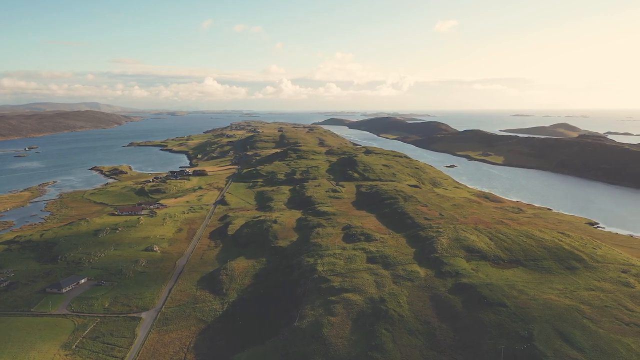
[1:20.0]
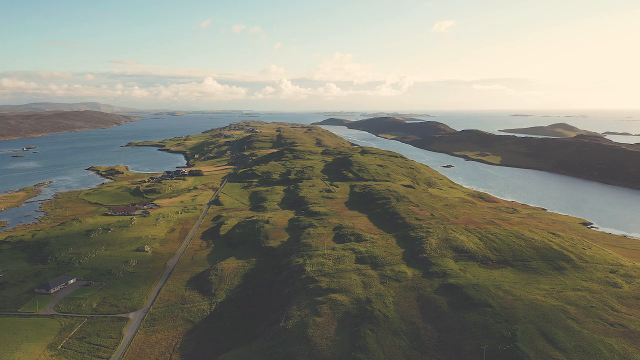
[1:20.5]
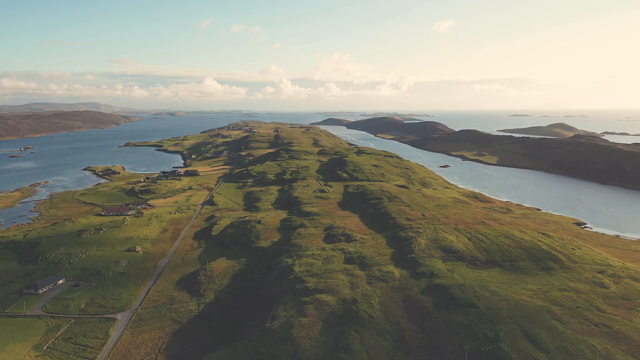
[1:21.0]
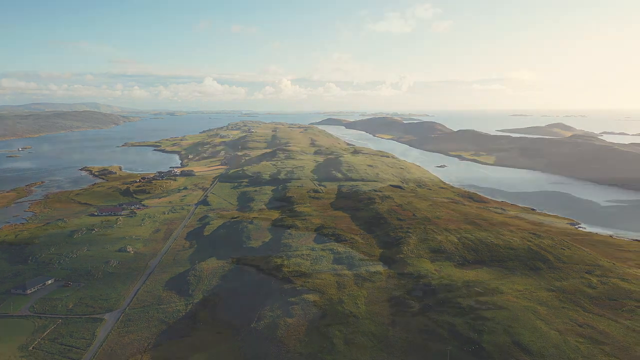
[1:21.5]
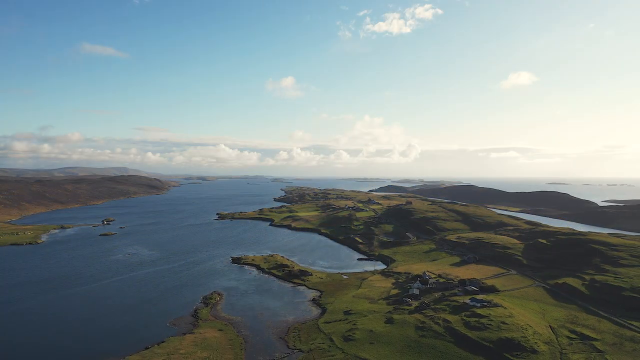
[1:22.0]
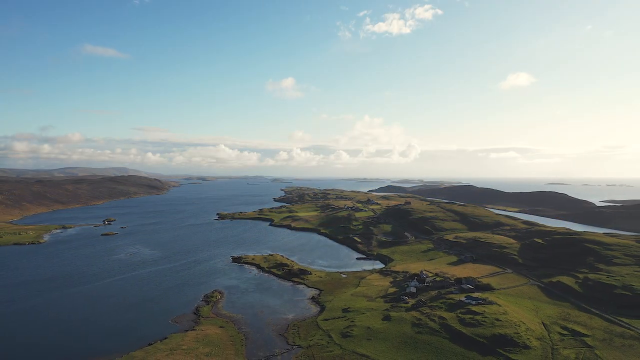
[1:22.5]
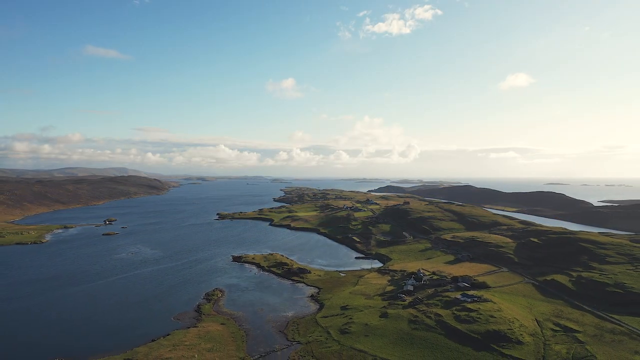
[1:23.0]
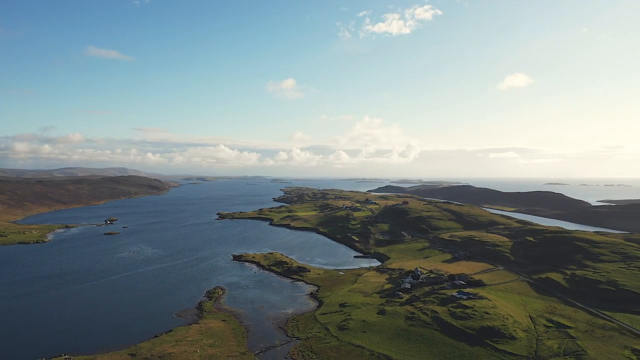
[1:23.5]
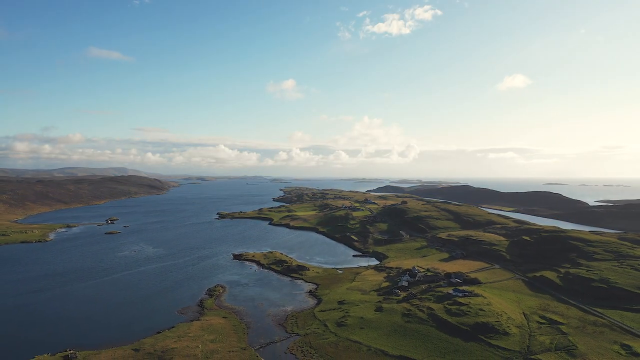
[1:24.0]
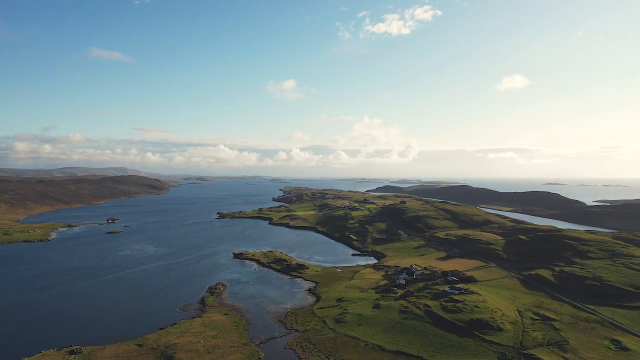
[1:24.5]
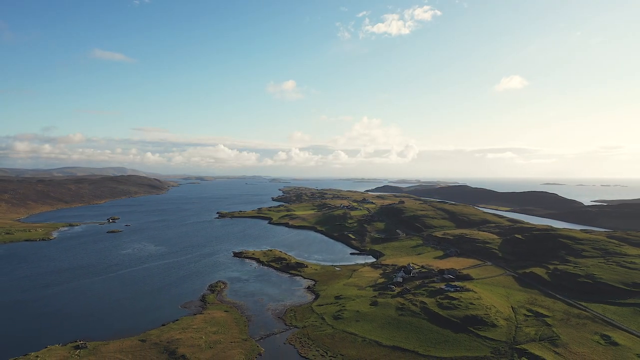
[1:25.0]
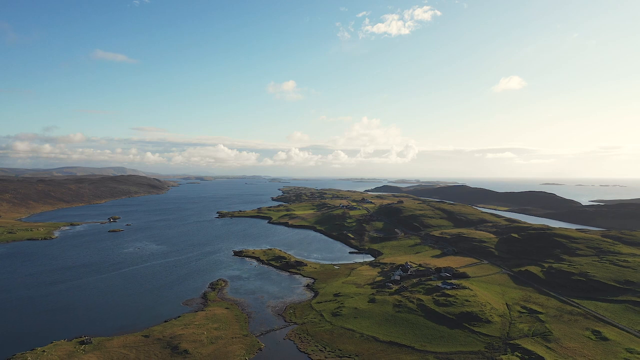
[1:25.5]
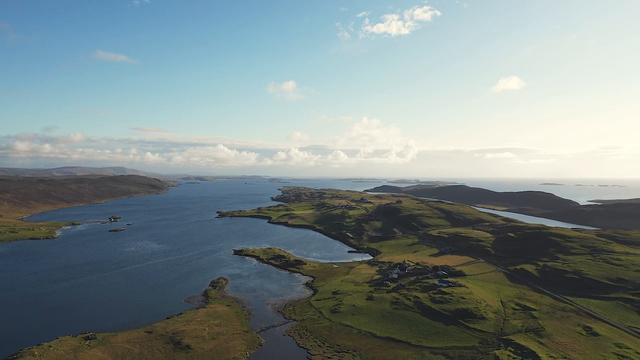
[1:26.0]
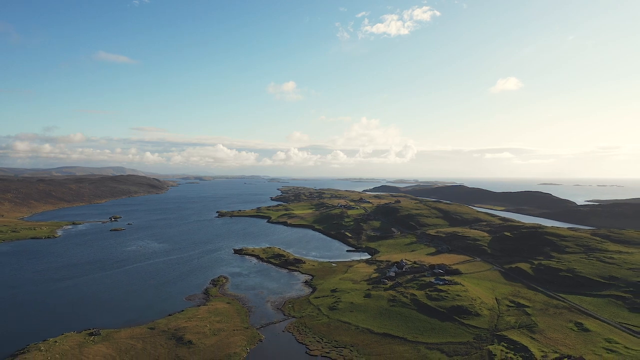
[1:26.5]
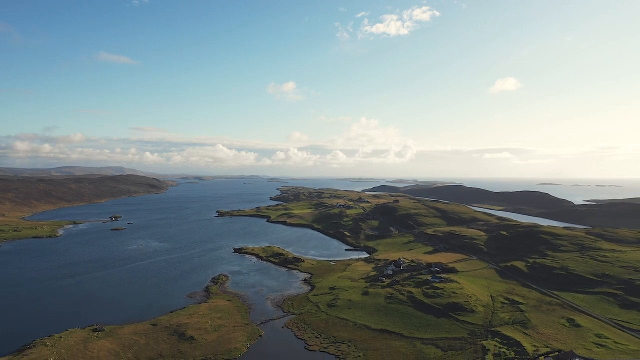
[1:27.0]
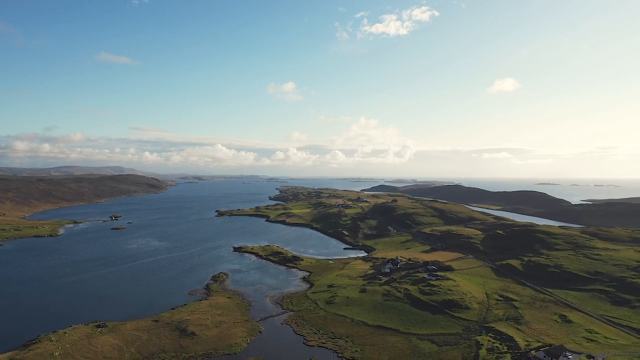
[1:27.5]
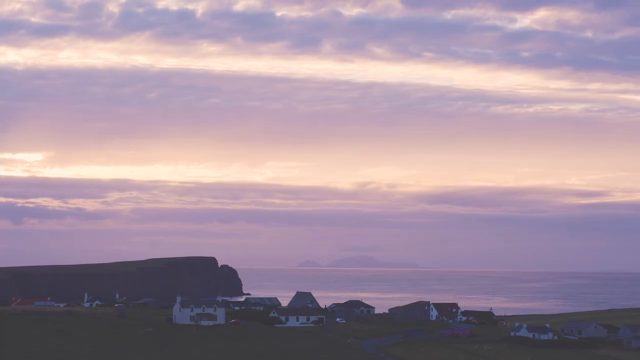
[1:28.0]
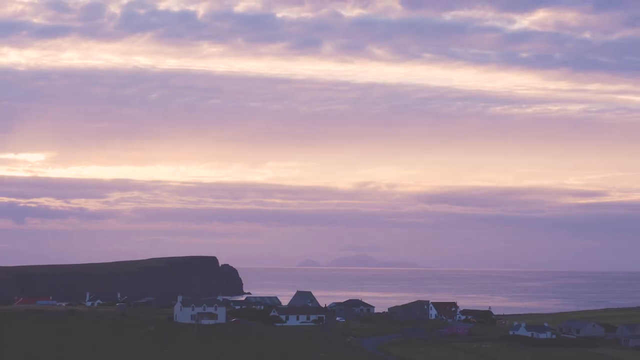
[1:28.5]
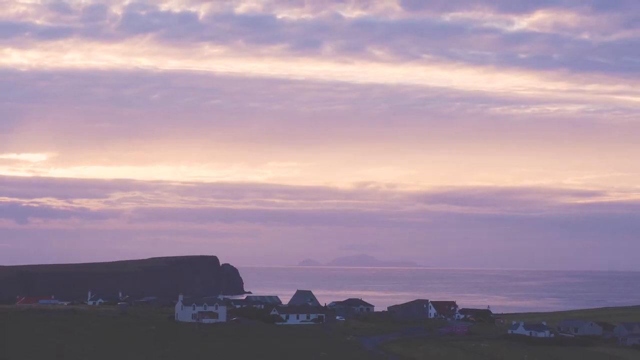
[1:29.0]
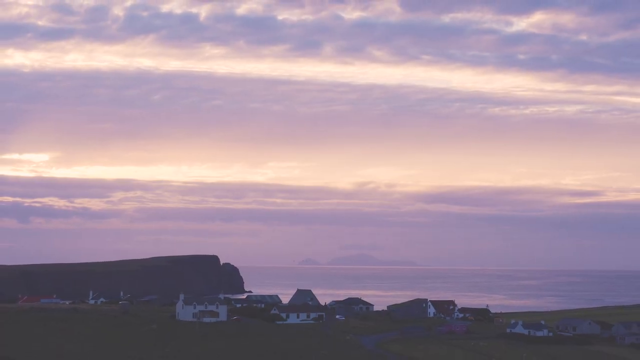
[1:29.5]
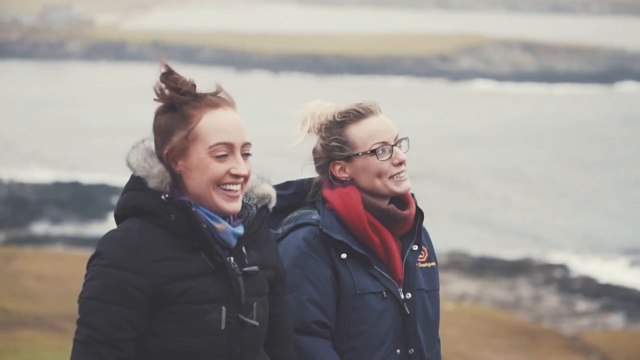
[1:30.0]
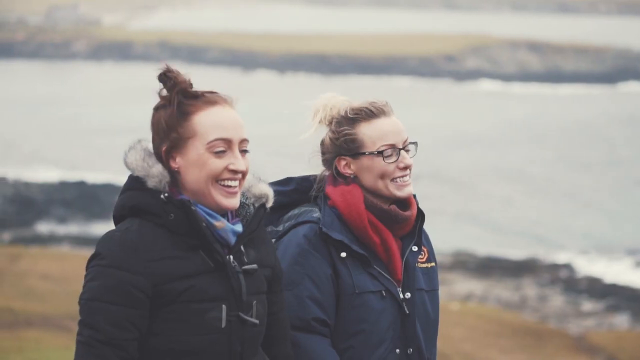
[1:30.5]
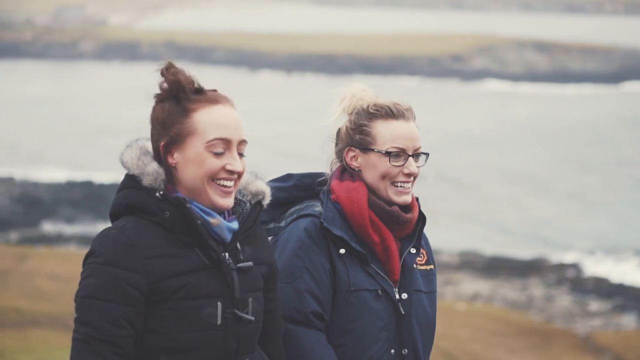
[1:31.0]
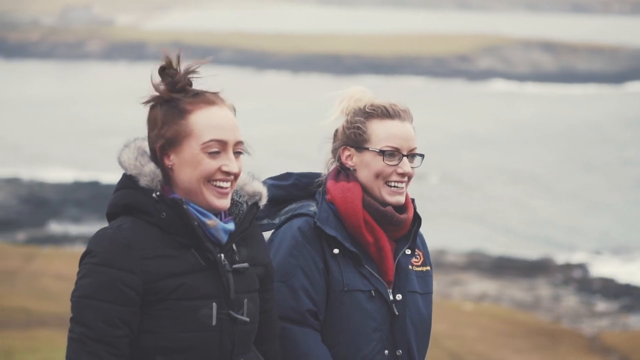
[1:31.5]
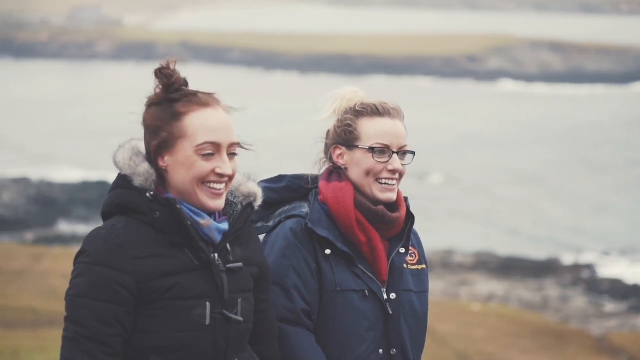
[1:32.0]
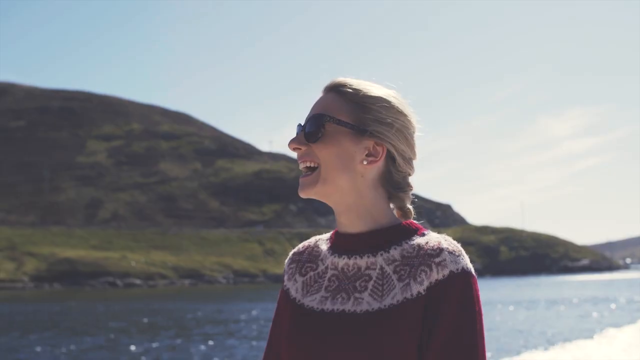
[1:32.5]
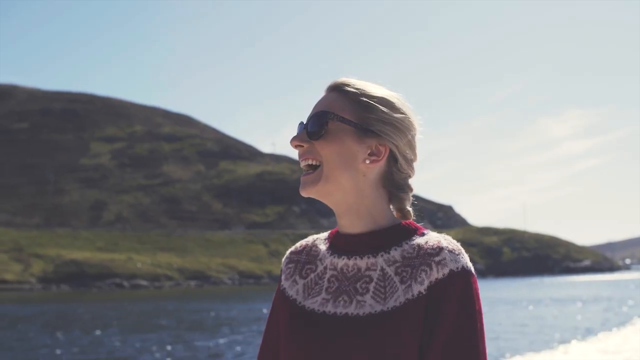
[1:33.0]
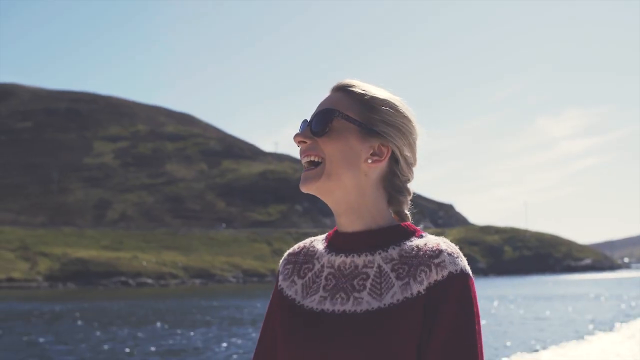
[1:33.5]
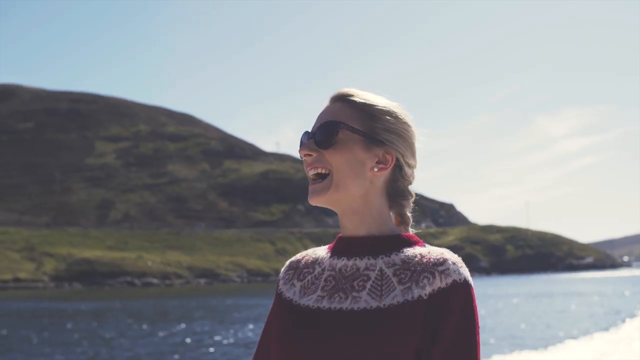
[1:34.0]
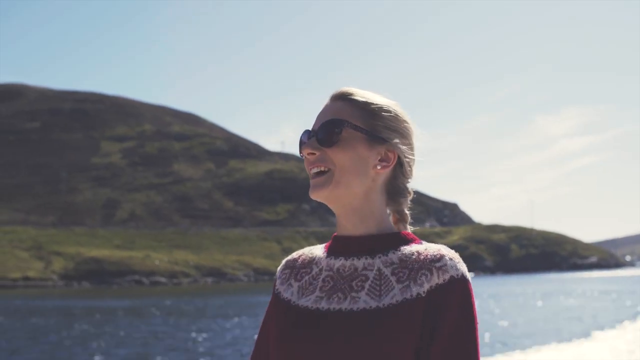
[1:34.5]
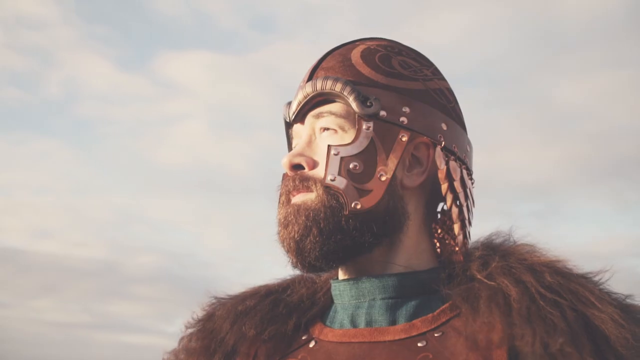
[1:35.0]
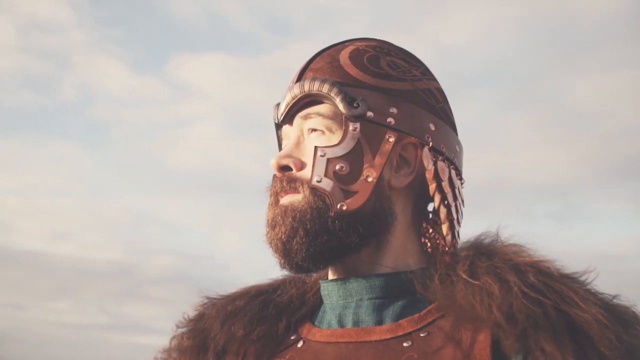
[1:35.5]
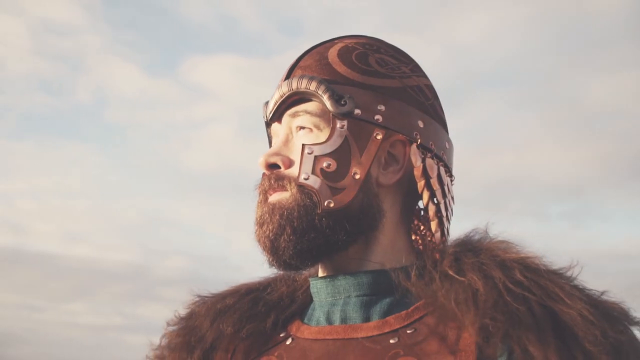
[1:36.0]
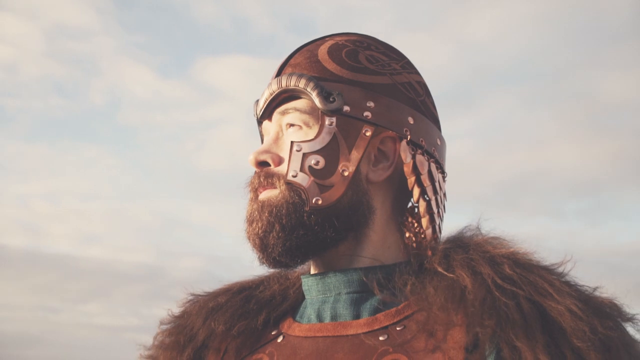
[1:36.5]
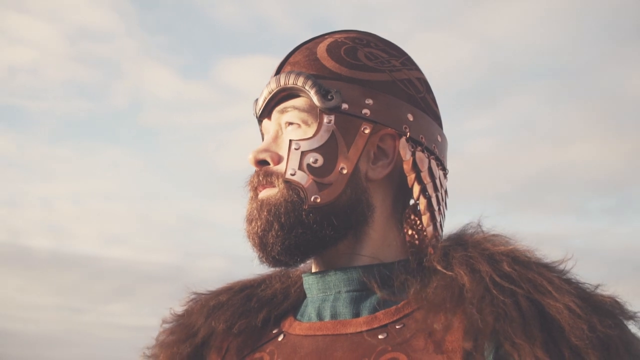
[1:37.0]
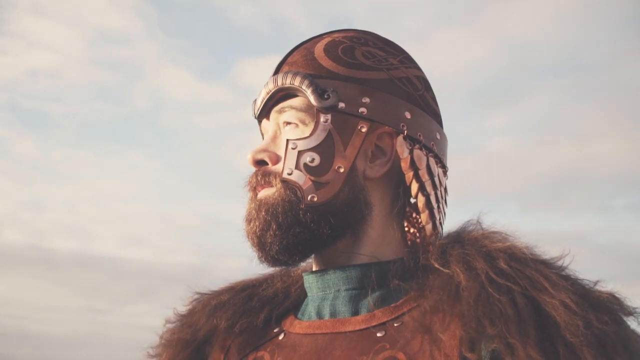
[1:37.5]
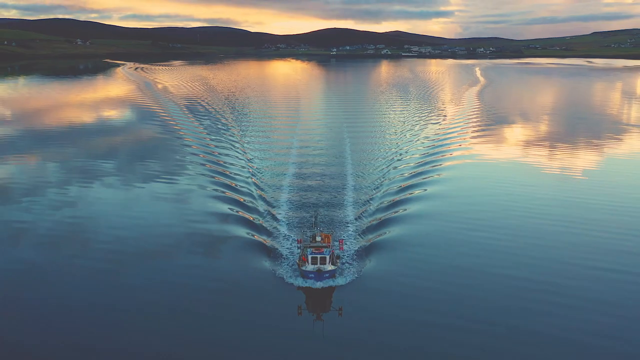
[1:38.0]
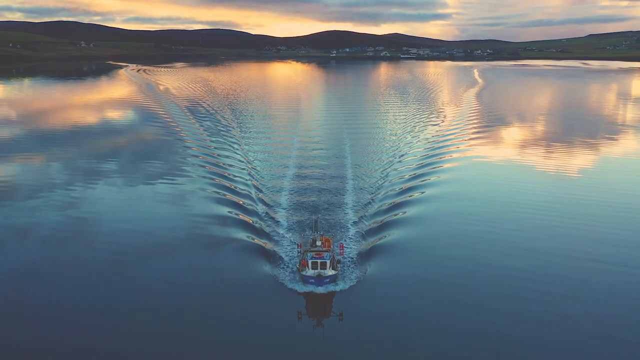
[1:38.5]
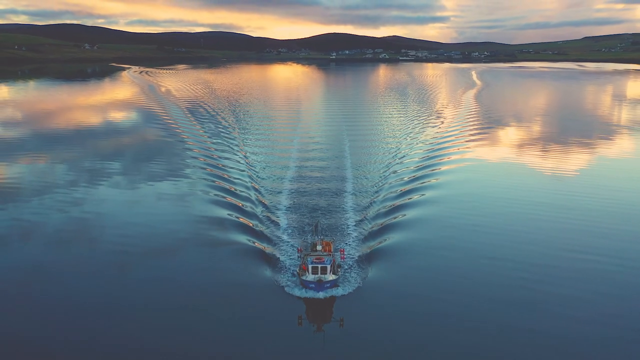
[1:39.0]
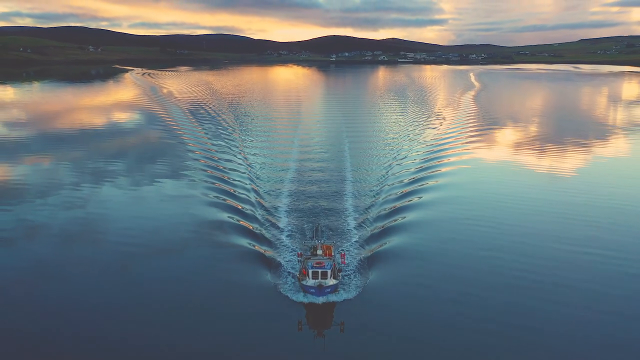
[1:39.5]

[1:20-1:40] The camera pans away from a long wide view of a green rural landscape, with blue ocean surrounding the island and a bright blue sky. It cuts to another rural landscape with more buildings under a purple-looking sky with trails of clouds going from right to left. Two women are laughing: the woman on the left wears a dark green coat with a fur collar and hood and has red hair and earrings; the woman on the right has blonde hair, glasses, a red scarf and a blue coat with a yellow logo with writing on it. Another woman on her own is shown in a rural setting with a mountainside, blue sky and sea behind her. She wears a red jumper with white patterns, has blonde hair tied into a plaited style, and is laughing, wearing sunglasses and an earring in her left ear. Next is what looks like a viking with a traditional viking helmet, a big brown beard and a fur coat, looking away into the distance; the landscape behind him is foggy and the sky is overcast. A bird's-eye view then shows a boat sailing toward the camera, with the waves of the ocean forming a V behind it.